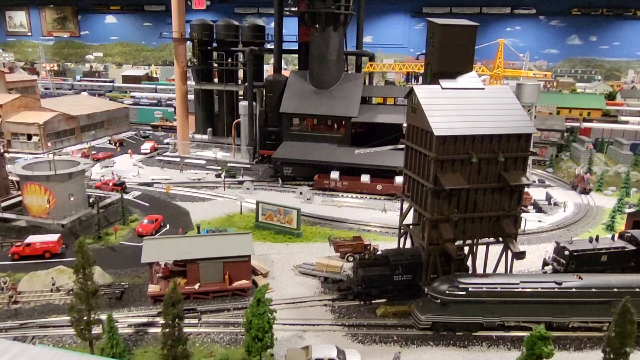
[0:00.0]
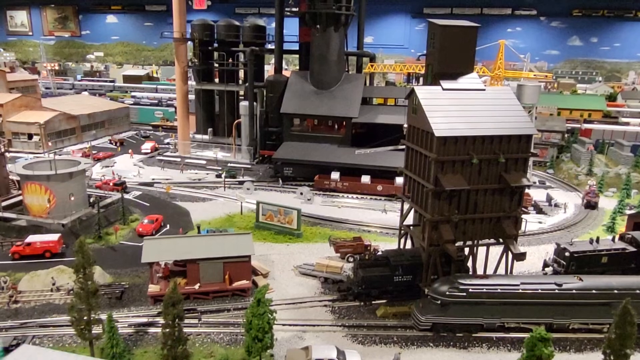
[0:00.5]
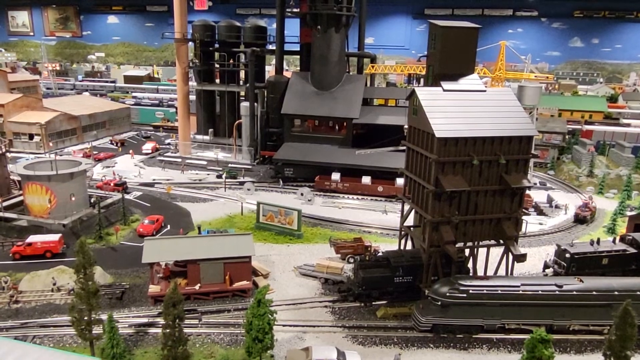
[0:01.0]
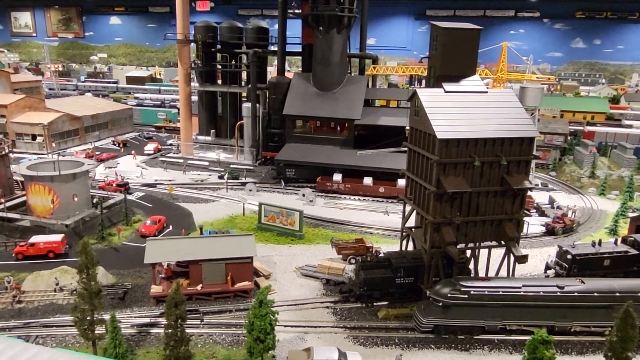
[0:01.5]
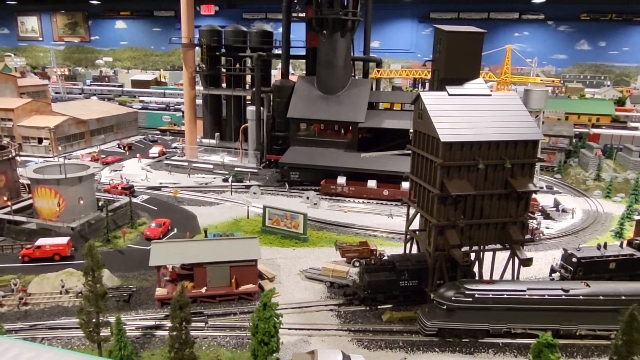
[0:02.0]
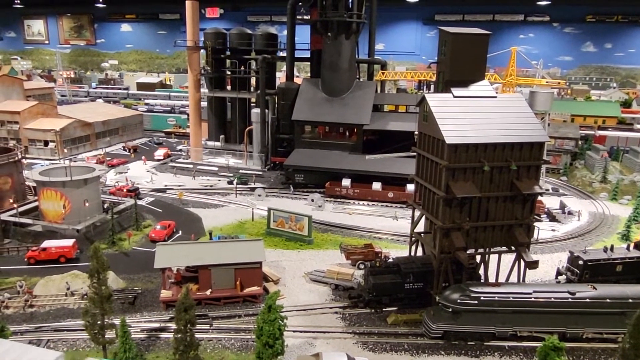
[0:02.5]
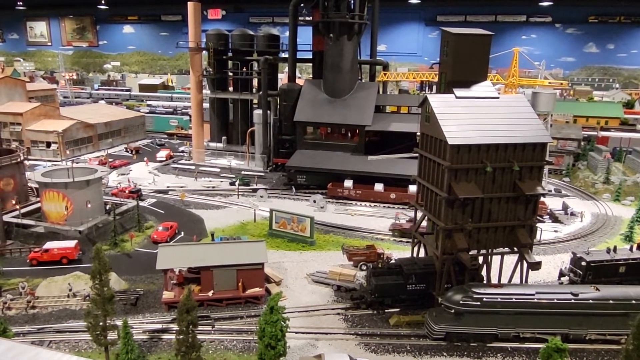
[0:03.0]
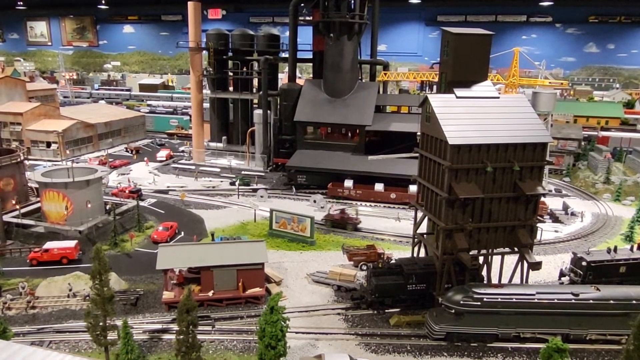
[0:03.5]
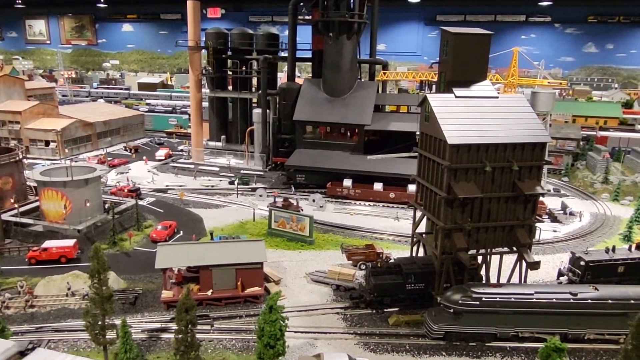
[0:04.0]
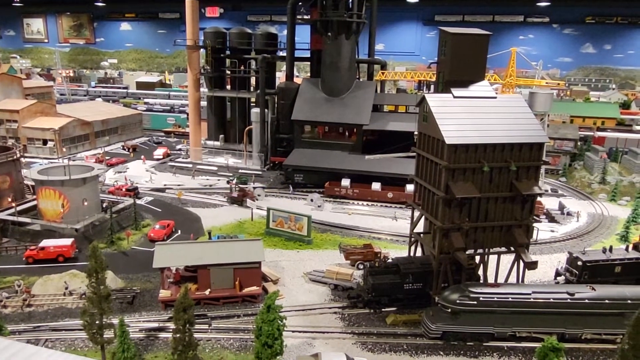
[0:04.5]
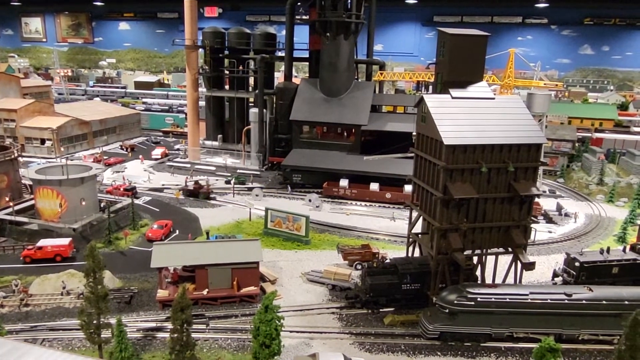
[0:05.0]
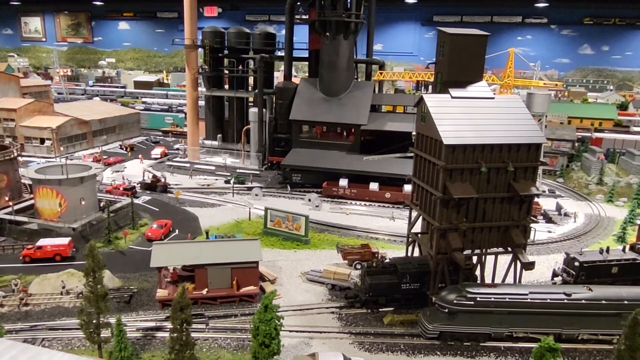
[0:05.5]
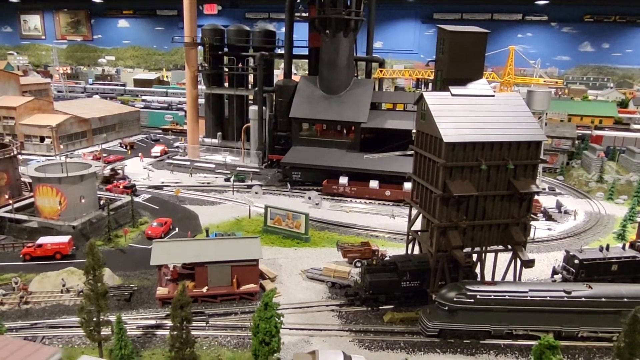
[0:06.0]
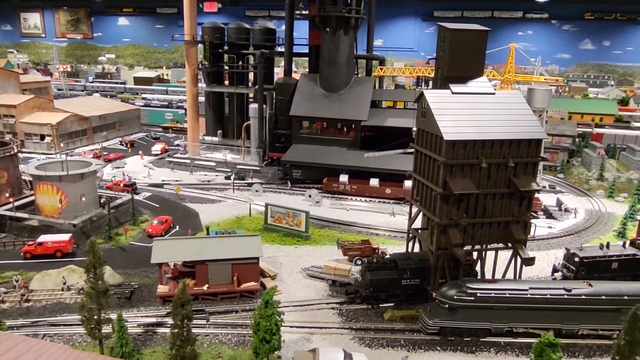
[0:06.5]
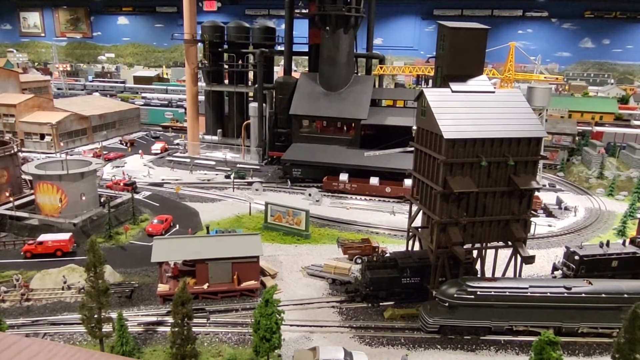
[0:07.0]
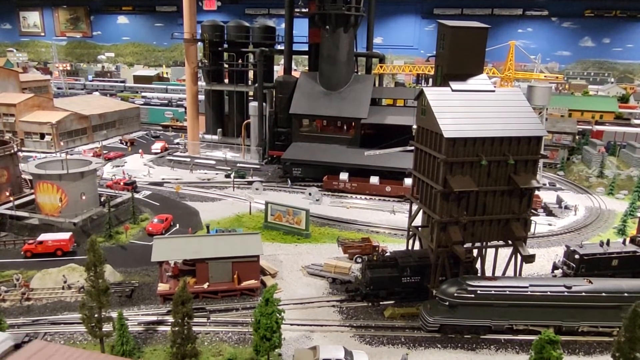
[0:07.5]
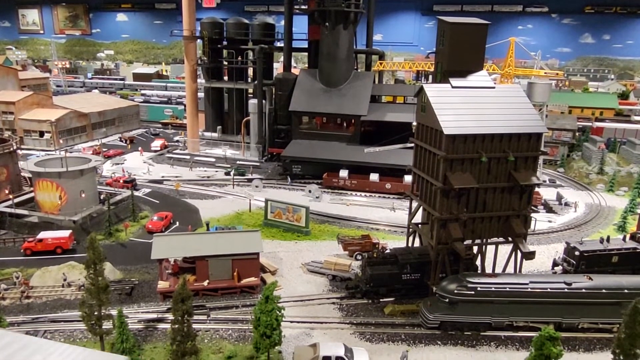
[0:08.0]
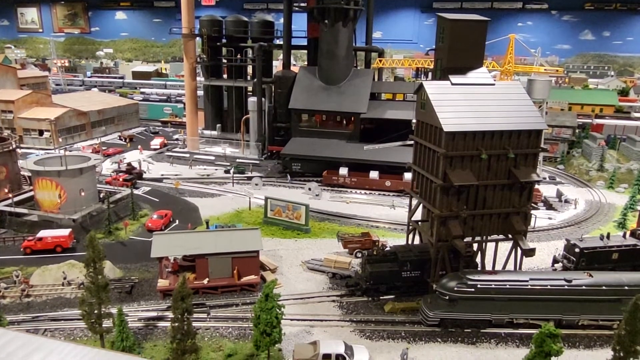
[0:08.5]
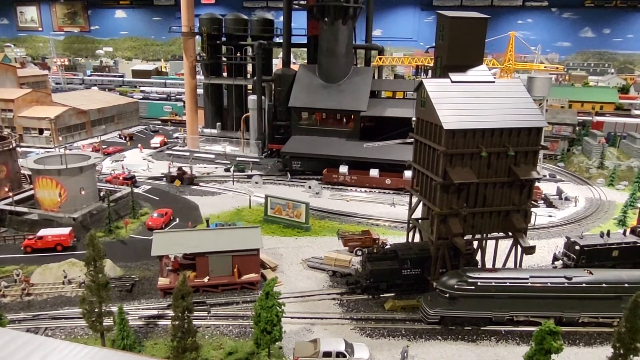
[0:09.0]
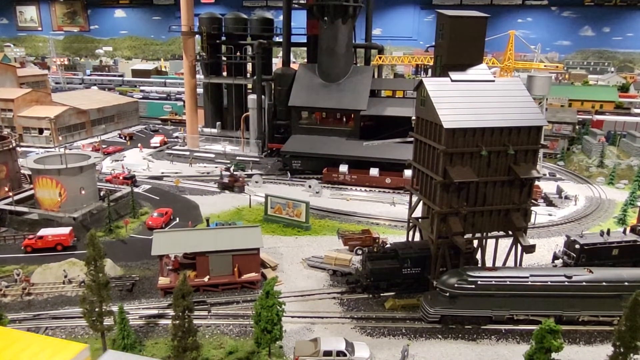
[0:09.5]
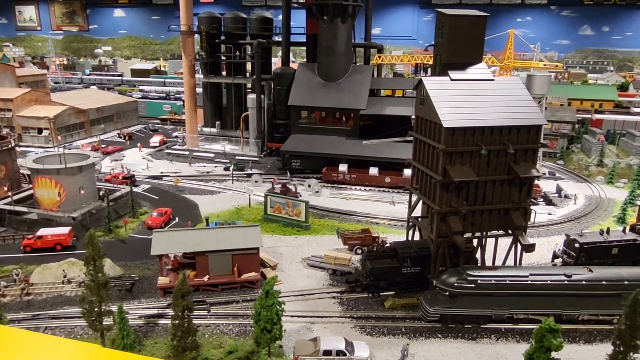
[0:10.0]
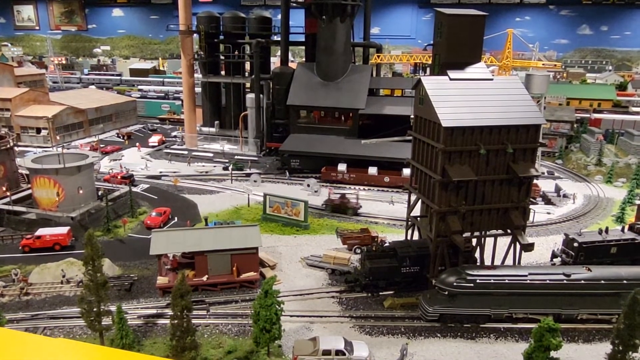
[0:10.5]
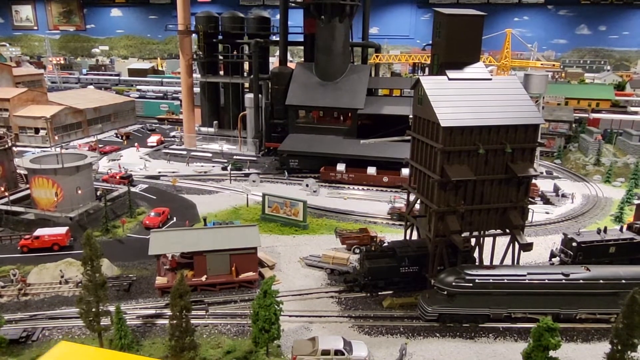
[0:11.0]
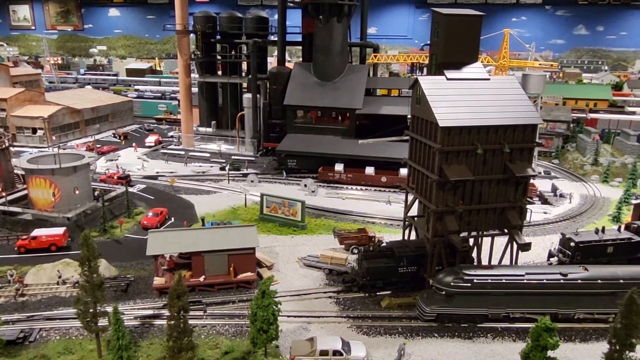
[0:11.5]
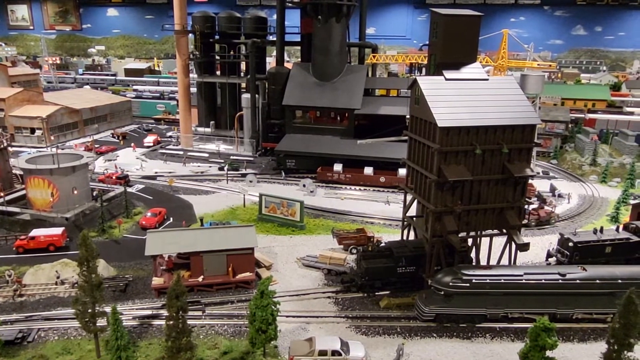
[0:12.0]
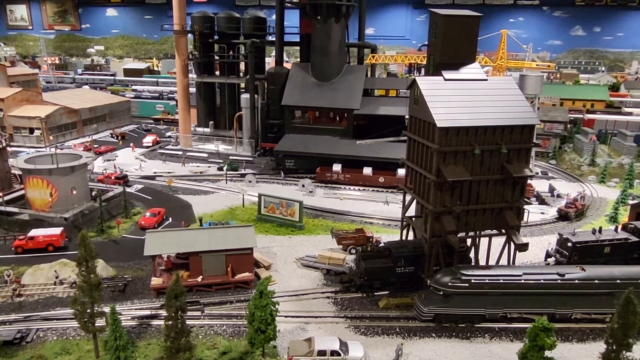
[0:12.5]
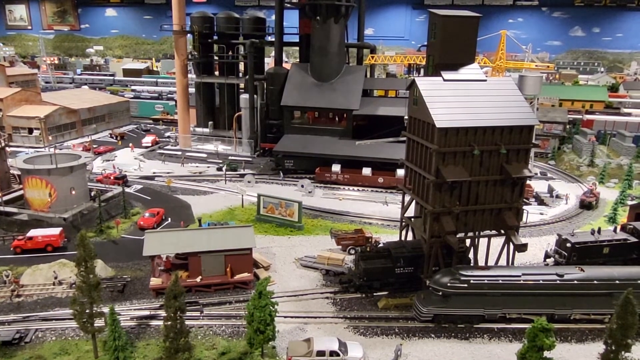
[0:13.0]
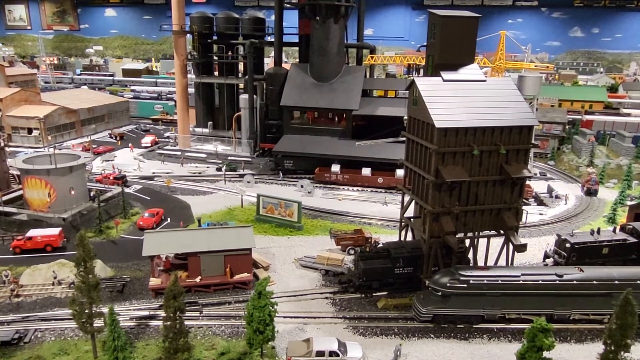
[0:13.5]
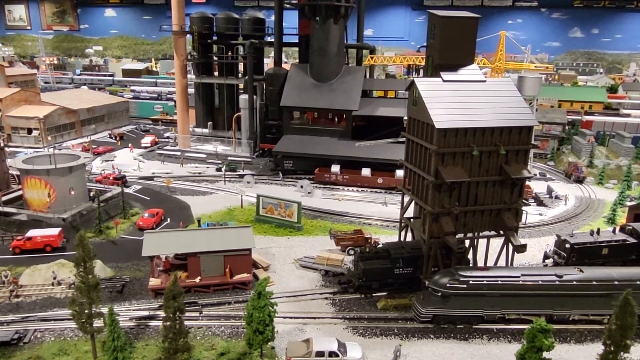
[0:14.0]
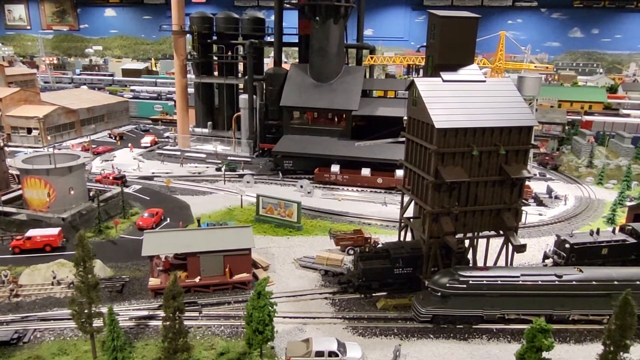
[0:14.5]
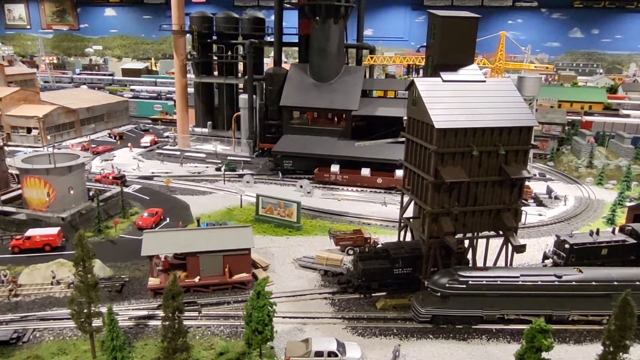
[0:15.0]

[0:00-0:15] A short recording shows someone's train collection and model train display. The display depicts a small industrial setting with various buildings and tracks for toy trains to ride around, with scenes typical of a working train industrial yard. It is a large, room-sized display on a mid-sized table. A hand cart moves back and forth, and in the foreground a large train with multiple cars travels from left to right. The backdrop is painted light blue with clouds, along with painted green mountains and hills, and pictures of trains hang from the wall. Among the buildings are billboards and parking lots with model cars, as well as a silo bearing the logo of the oil company Shell.